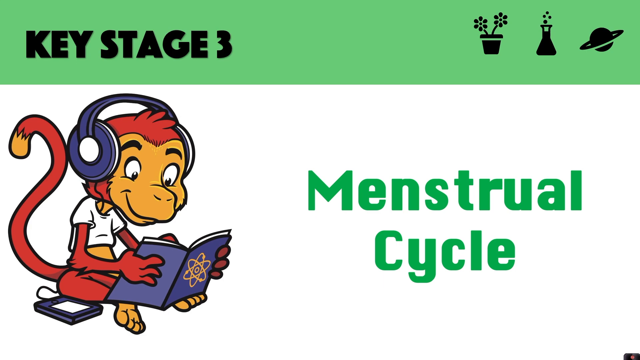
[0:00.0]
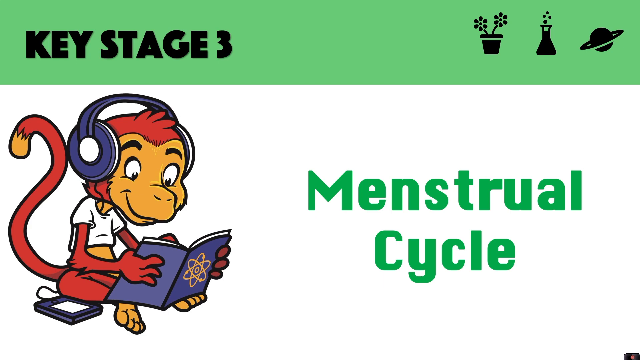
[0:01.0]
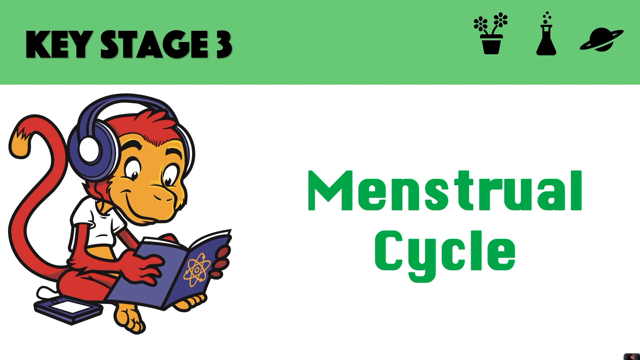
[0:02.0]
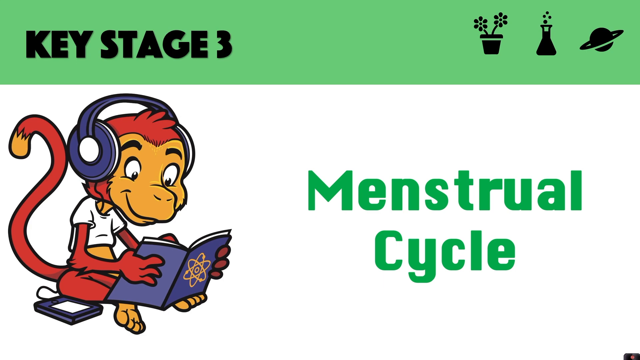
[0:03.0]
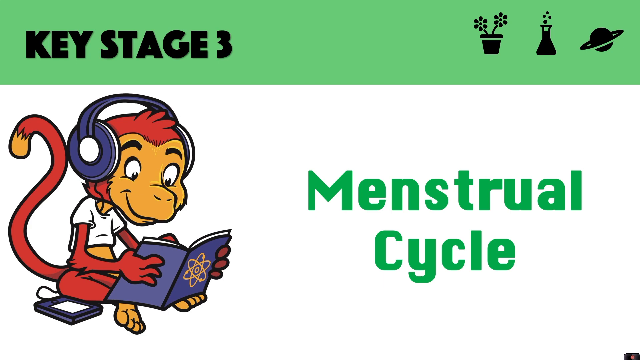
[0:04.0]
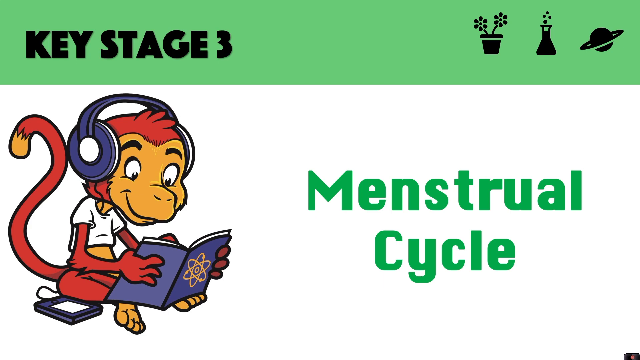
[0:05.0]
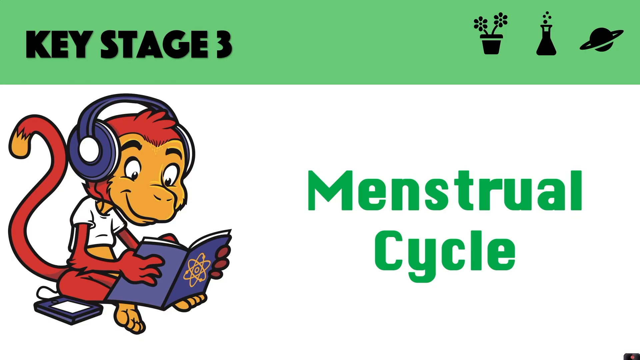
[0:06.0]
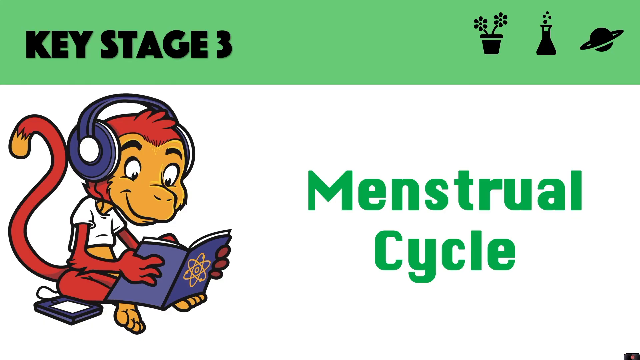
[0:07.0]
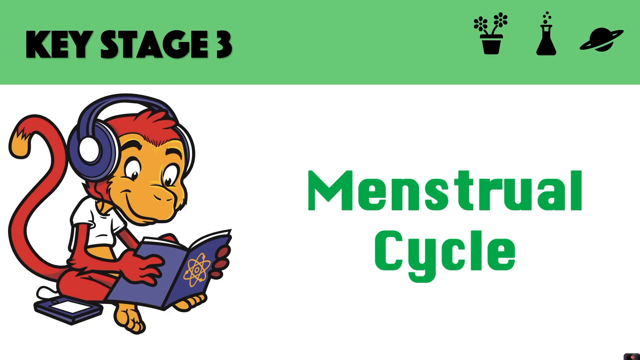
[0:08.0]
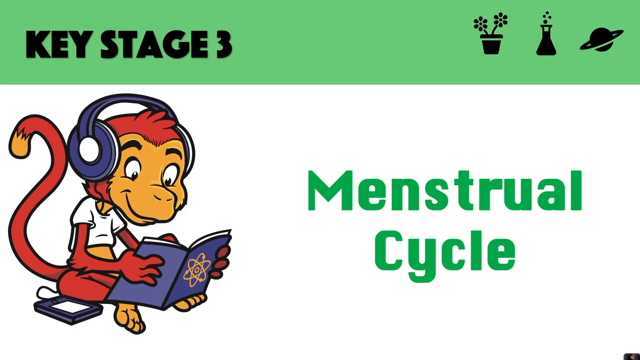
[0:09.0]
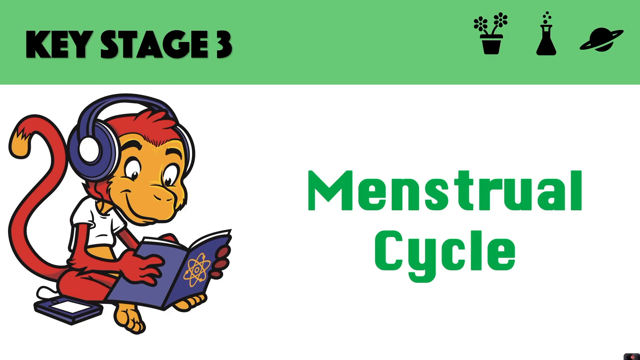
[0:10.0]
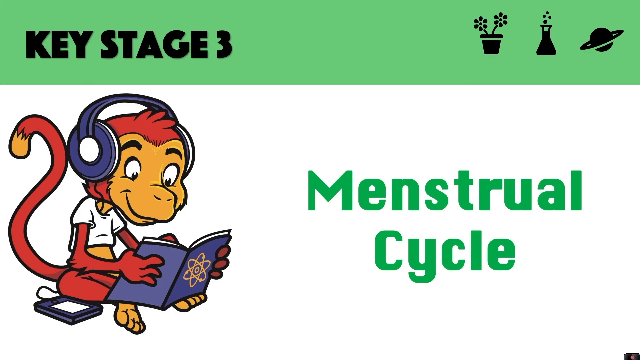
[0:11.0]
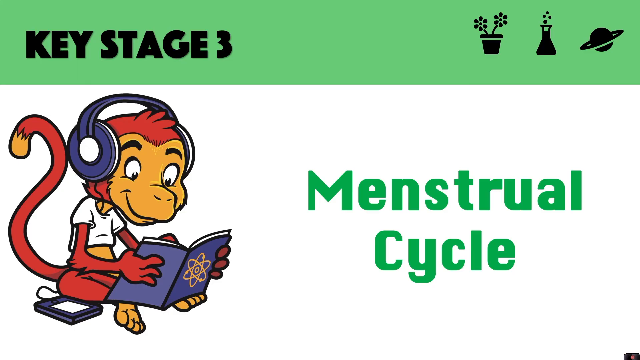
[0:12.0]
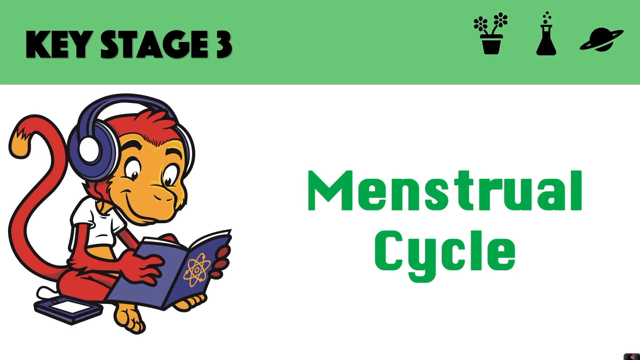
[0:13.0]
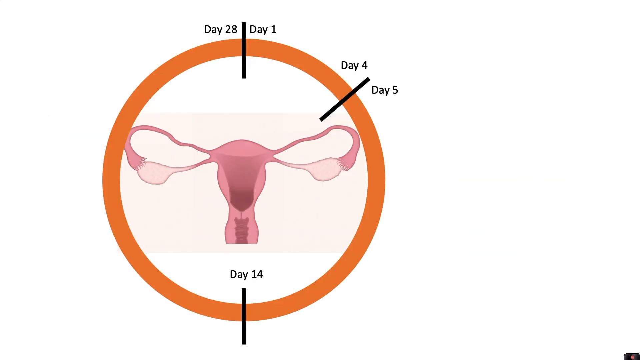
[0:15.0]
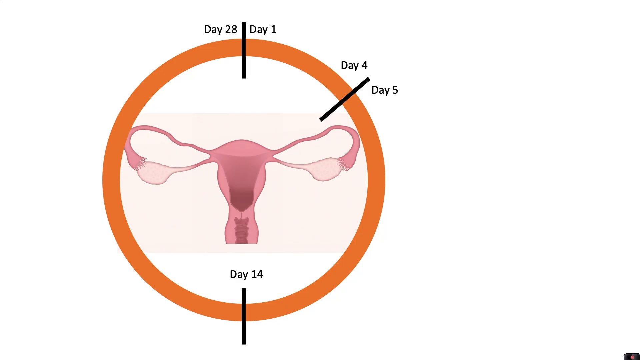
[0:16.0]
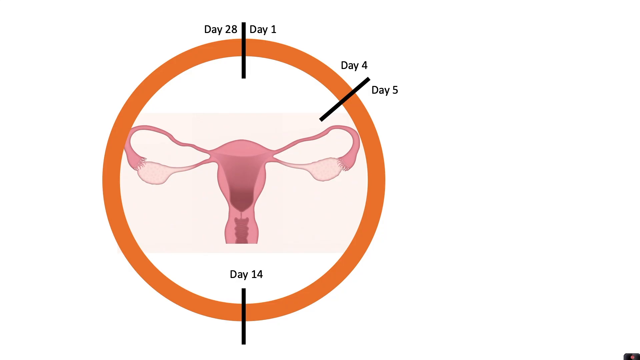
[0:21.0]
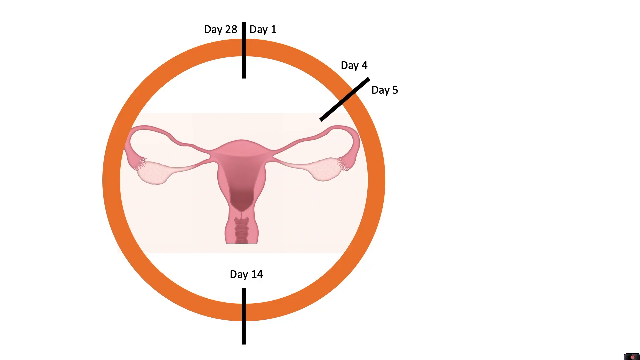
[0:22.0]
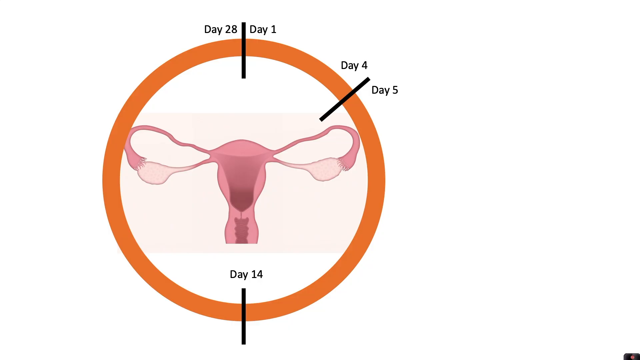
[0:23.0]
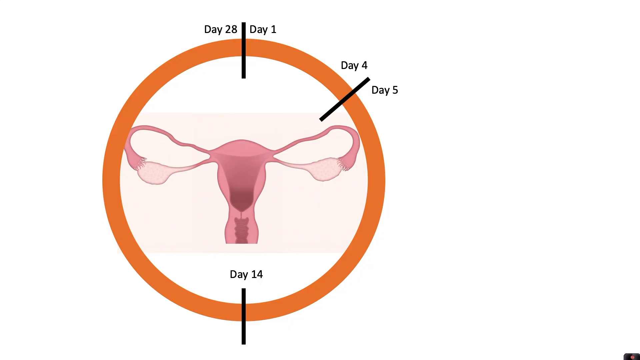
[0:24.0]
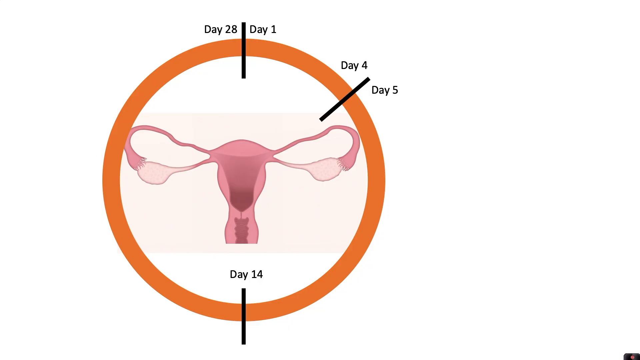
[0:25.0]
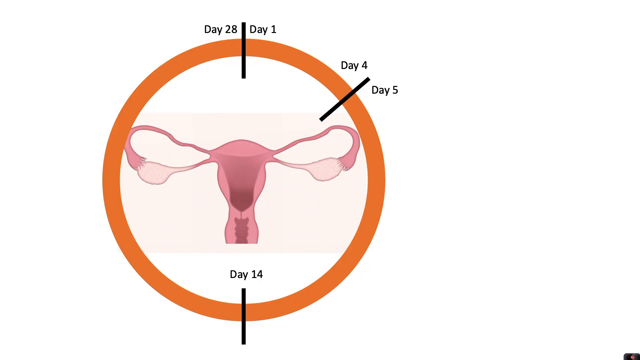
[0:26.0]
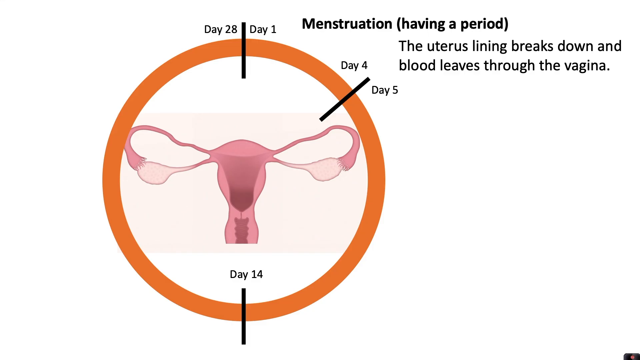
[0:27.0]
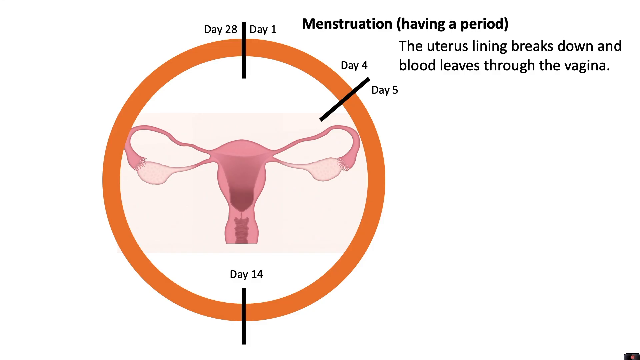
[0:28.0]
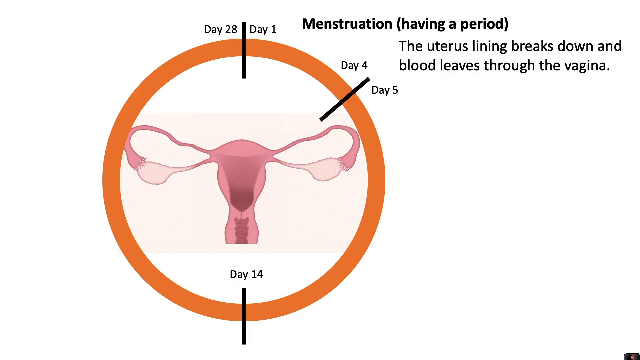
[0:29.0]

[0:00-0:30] The video opens on a white background with a light green border box at the top. On the left side, large bold black letters read "Key Stage 3." On the right side are black symbols: one looks like a small pot with two flowers sticking out, one looks like a small beaker with what seem to be bubbles coming out the top, and another looks like a planet with a ring around it. Below, on the white background, a cartoon monkey is on the left; it wears blue headphones and a white t-shirt, is reading a blue book, and has what looks like a smartphone next to it. On the right side of the screen, large green text reads "Menstrual Cycle." The next slide has a white background with a large orange circle outline, and in the middle is a clip art image of the woman's reproductive system. Tick marks are around the circle. At the top center, where 12 o'clock would be, a black tick mark has "day 28" on its left and "day 1" on its right. Another tick mark where 2 o'clock would be has "day 4" on its left and "day 5" on its right. A tick mark at the bottom, where 6 o'clock would be, is labeled "day 14." In the top right of the white background, bold black text reads "Menstruation (having a period)," and beneath it, less bold black text reads "the uterus lining breaks down and blood leaves through the vagina."